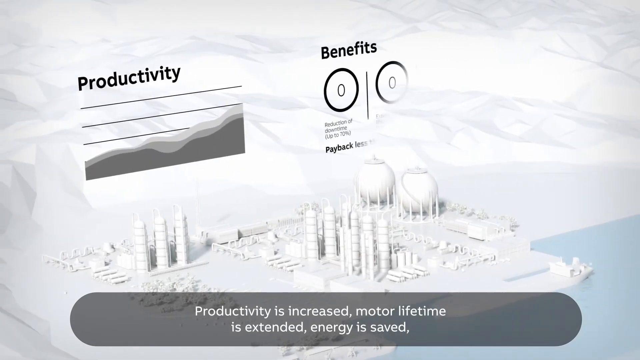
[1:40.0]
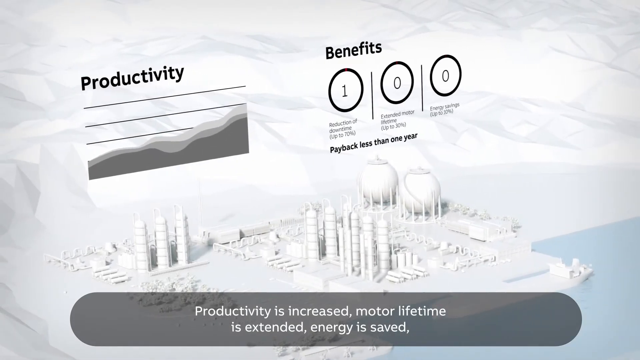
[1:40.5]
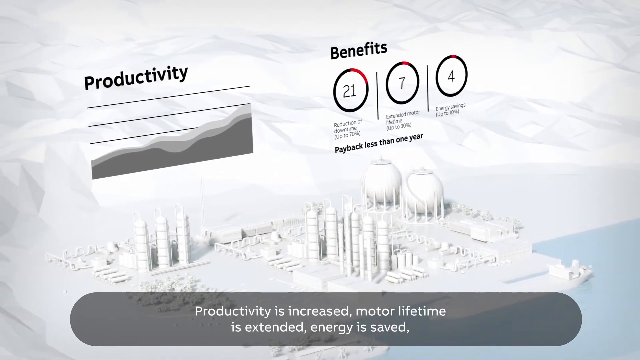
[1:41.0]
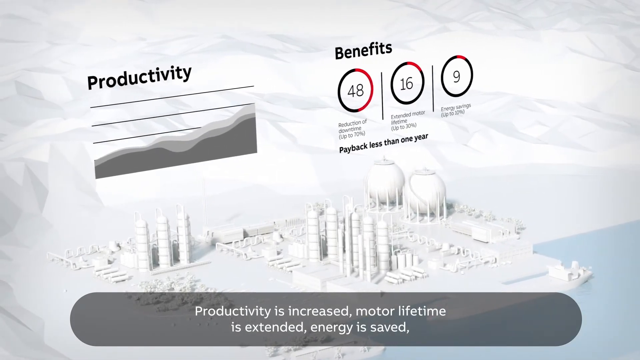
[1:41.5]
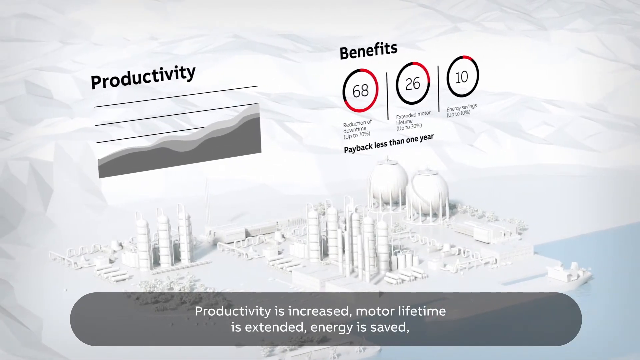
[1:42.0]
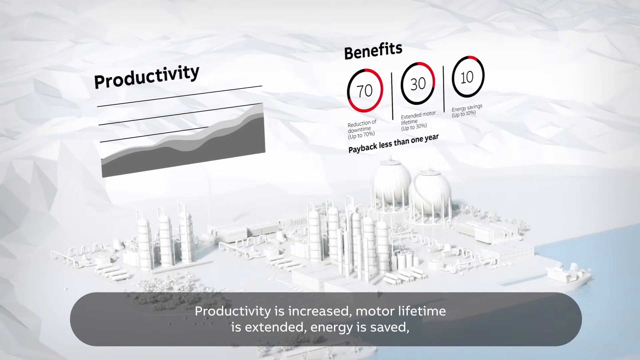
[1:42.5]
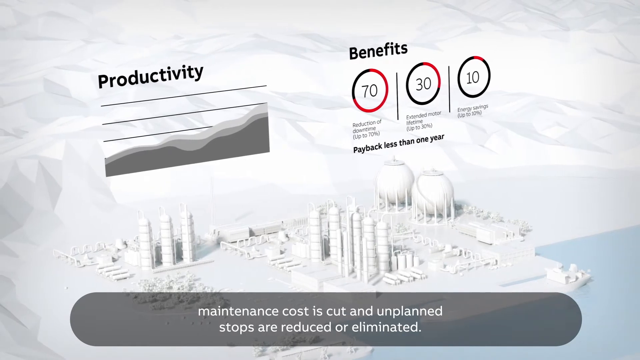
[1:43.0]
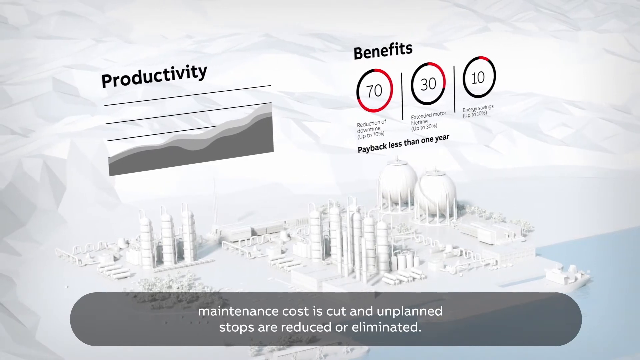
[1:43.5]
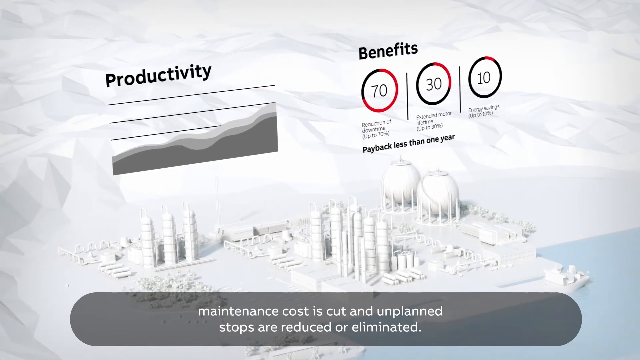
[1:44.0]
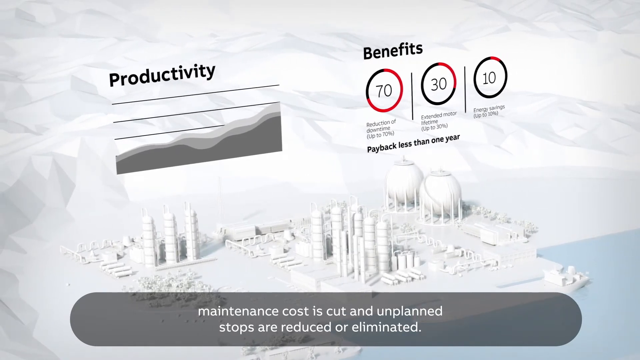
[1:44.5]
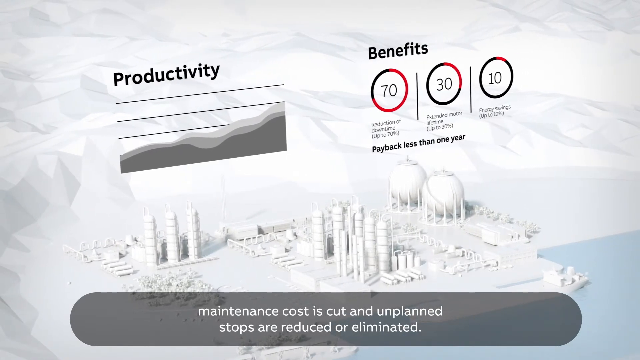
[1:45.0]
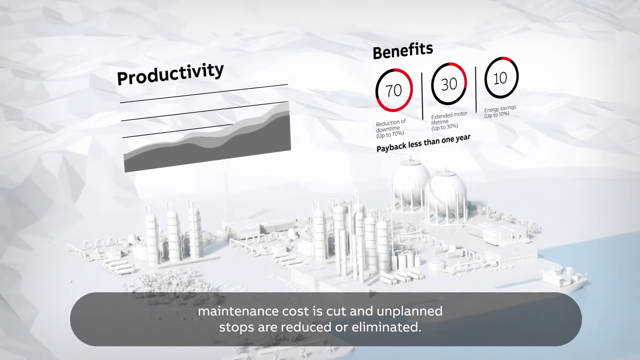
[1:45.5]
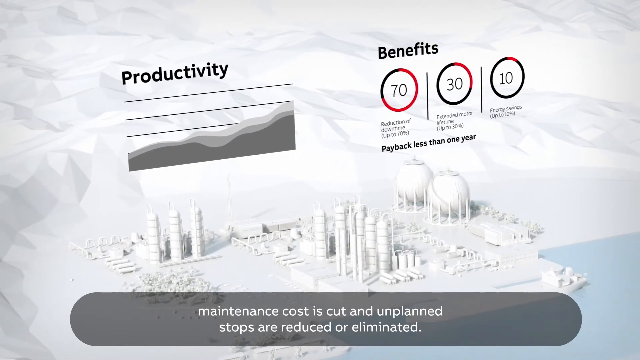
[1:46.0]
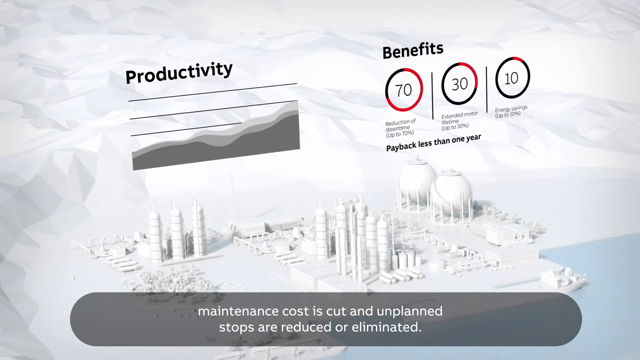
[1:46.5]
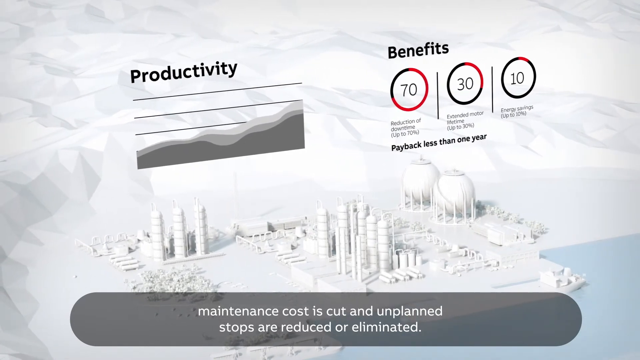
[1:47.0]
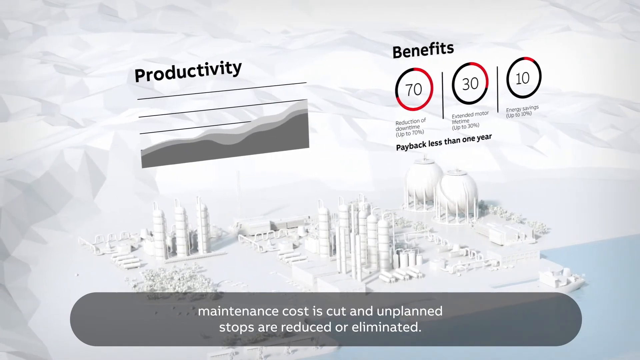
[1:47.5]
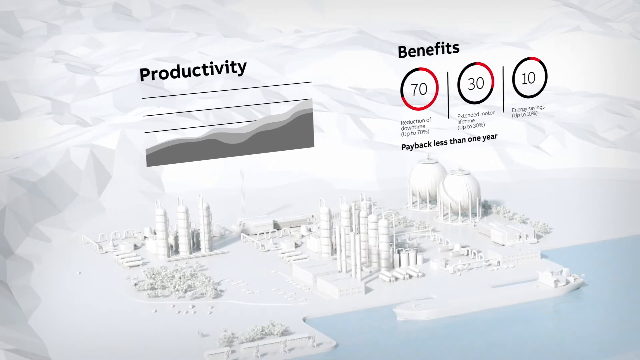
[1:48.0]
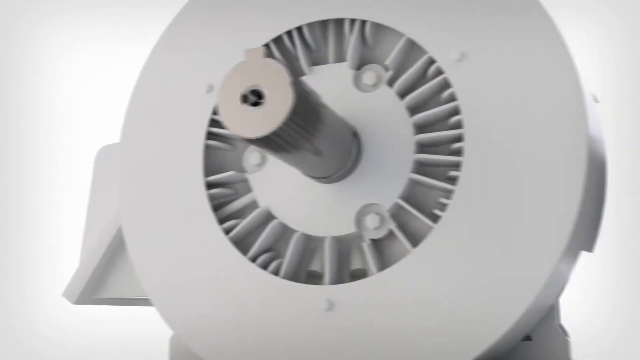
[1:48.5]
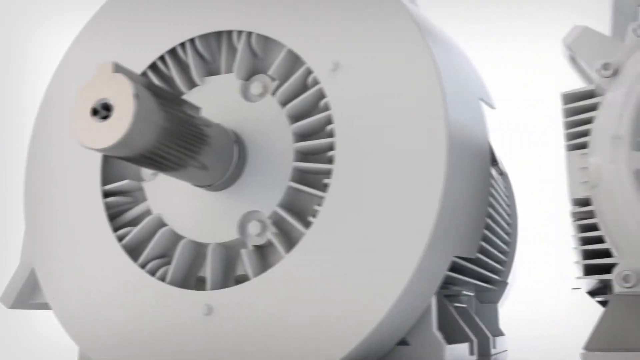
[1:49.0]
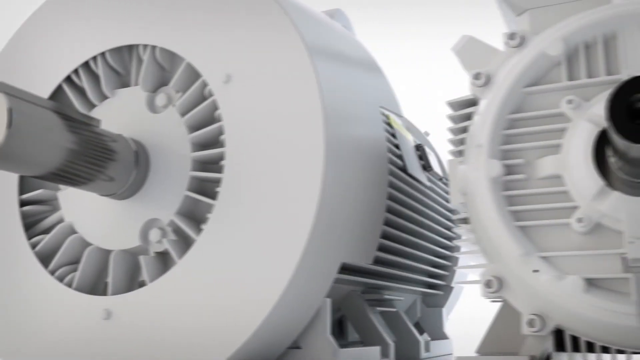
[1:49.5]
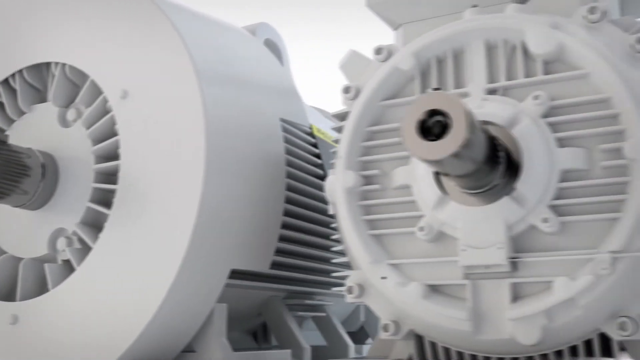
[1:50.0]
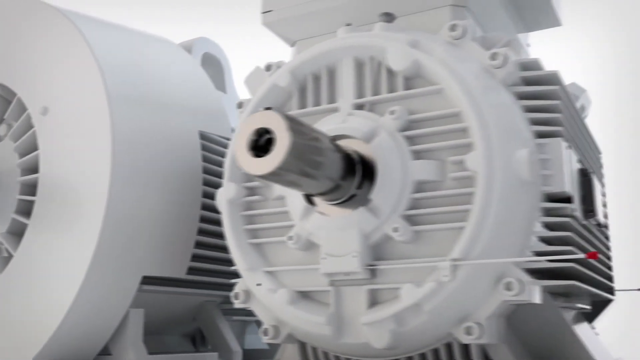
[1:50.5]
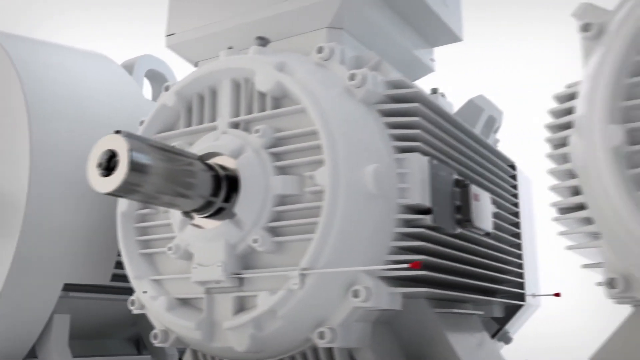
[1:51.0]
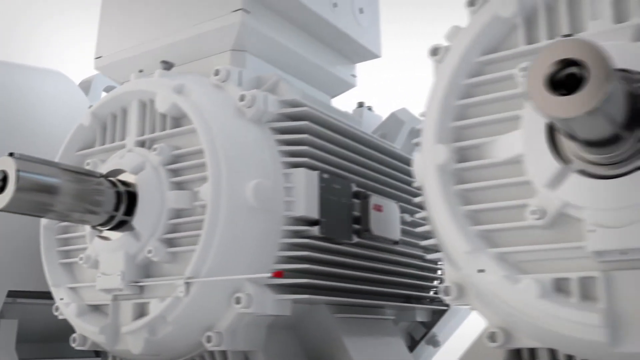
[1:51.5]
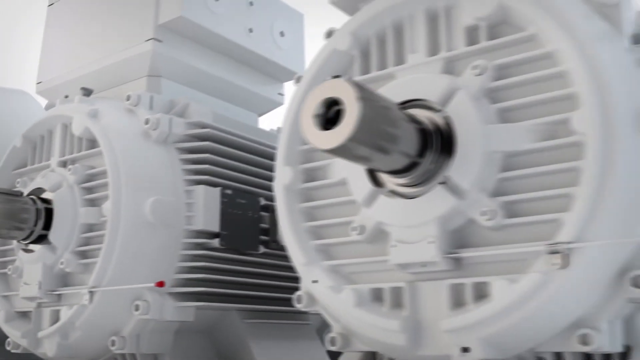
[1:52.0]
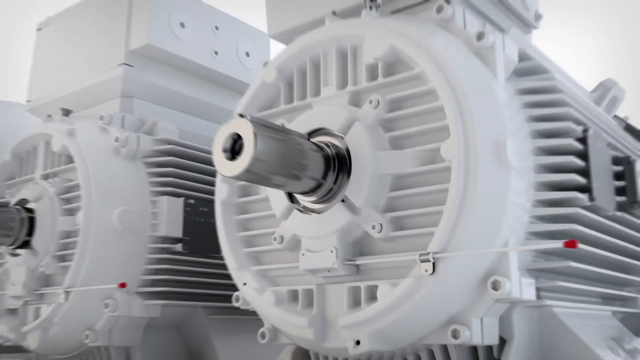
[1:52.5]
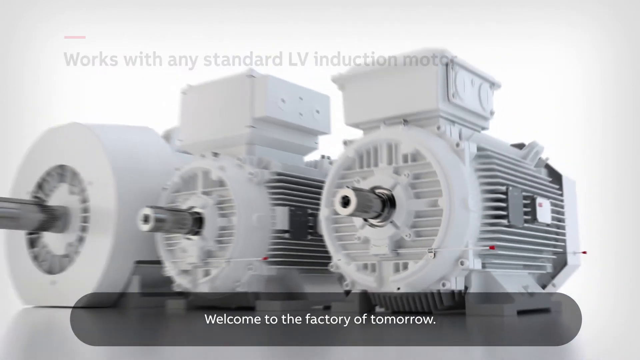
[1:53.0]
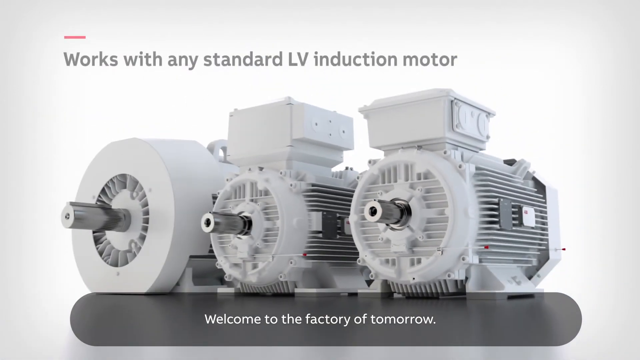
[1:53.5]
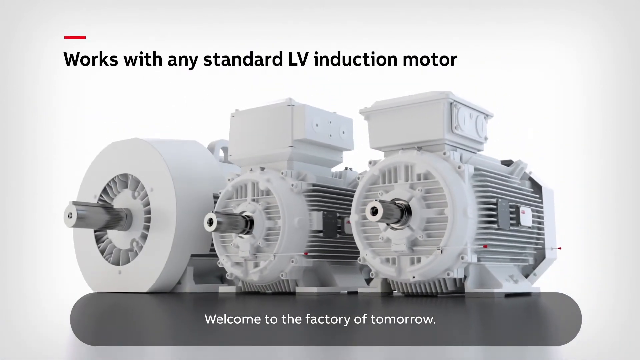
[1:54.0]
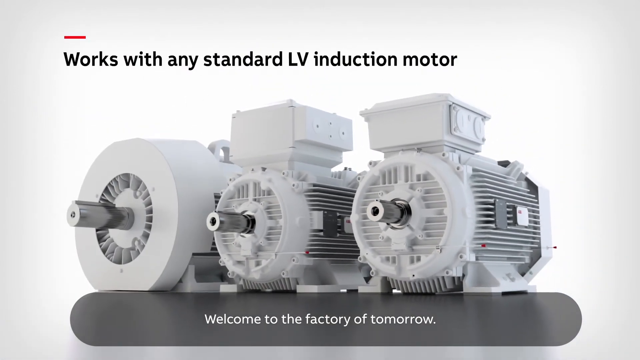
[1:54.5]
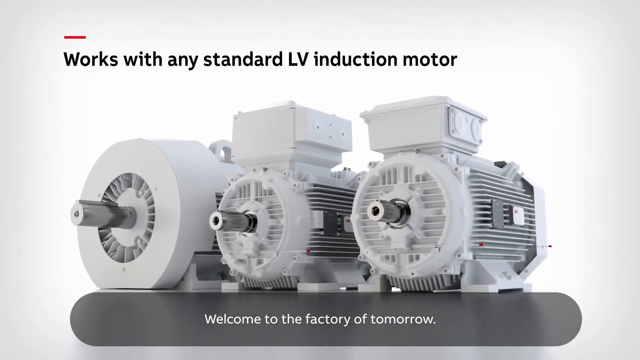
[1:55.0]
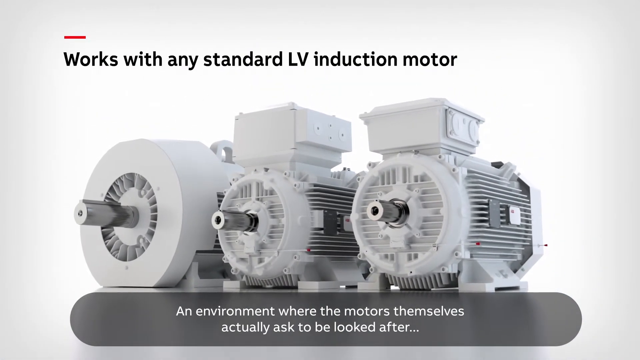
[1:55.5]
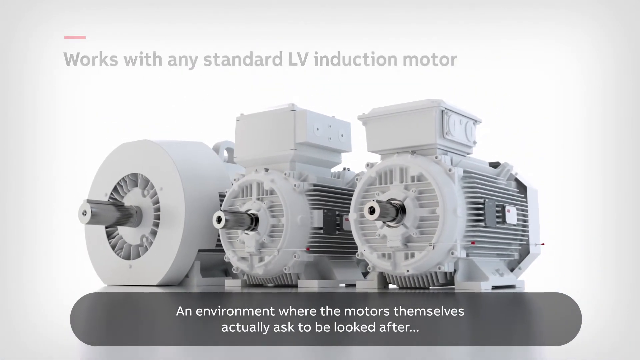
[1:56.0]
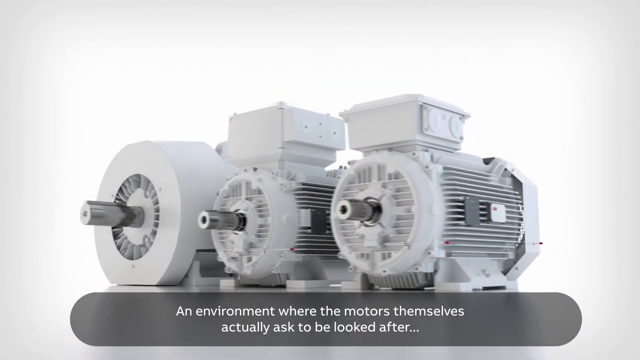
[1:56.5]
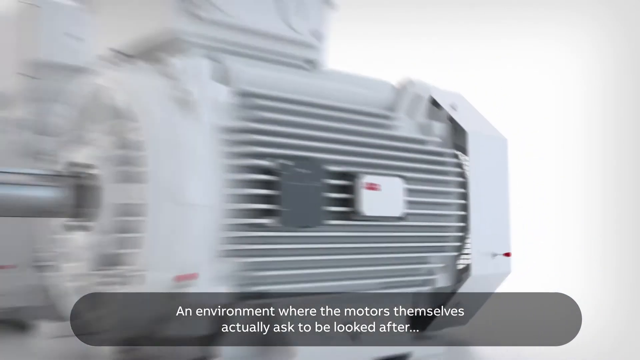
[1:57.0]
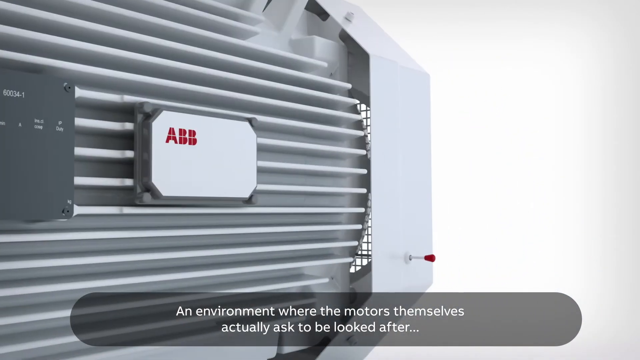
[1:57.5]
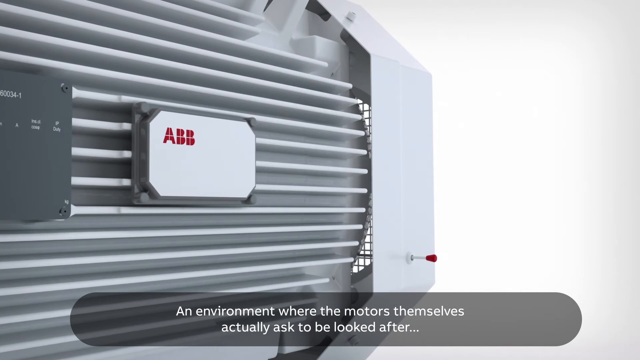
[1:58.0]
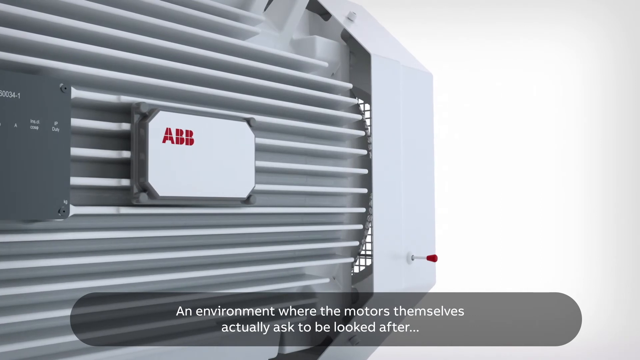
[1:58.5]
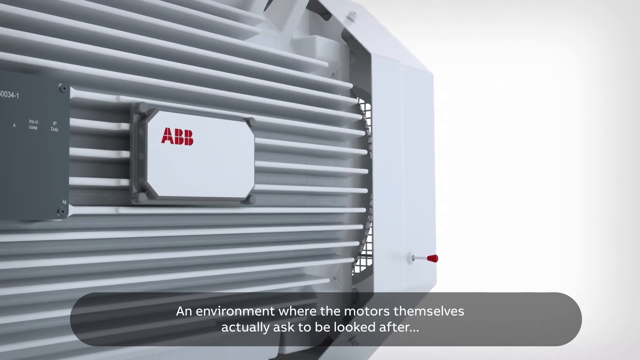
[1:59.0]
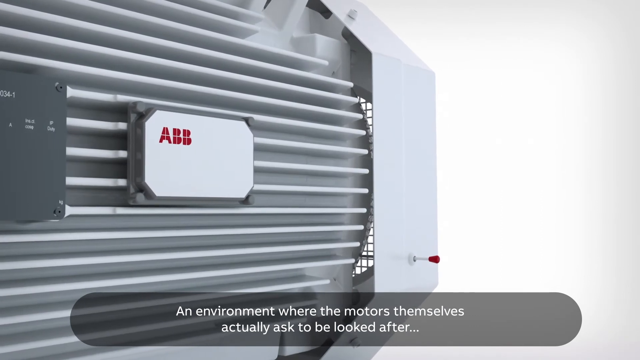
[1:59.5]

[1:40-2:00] A 3D rendering shows a town with multiple facilities. Toward the top of the screen are "productivity" and a graph, and off-center toward the right is "benefits." The bottom of the screen reads "productivity is increased motor lifetime is extended energy is saved." Benefit numbers roll in: 70, 30 and 10, all in red and black circles, along with "payback less than one year," while the bottom of the screen reads "maintenance cost is cut and unplanned stops are reduced or eliminated." The image rotates. The view moves to a row of machines with text saying "works with any standard LV induction motor," and at the bottom, "welcome to the factory of tomorrow" and "an environment where the motors themselves actually ask to be looked after." The camera then zooms in on the ABB logo.